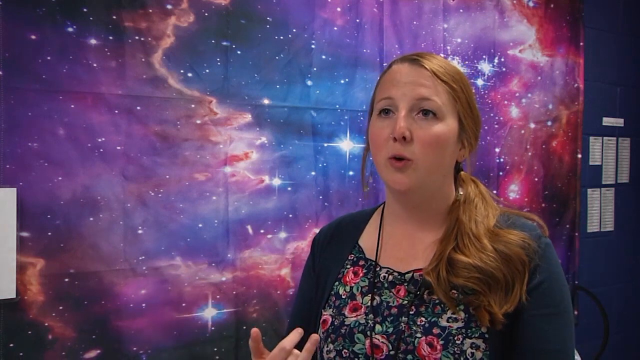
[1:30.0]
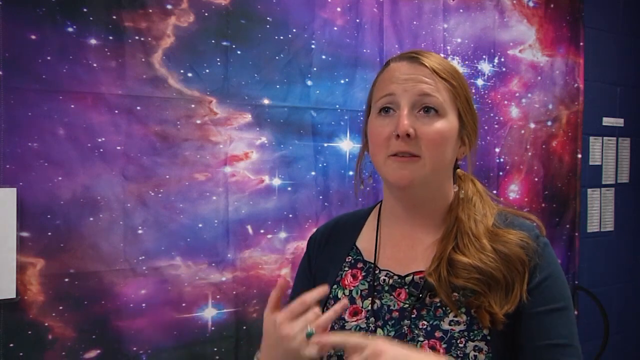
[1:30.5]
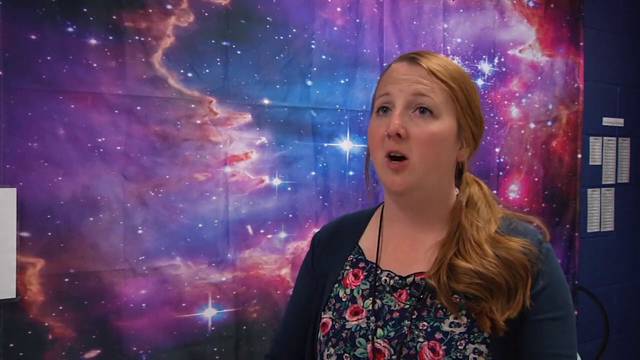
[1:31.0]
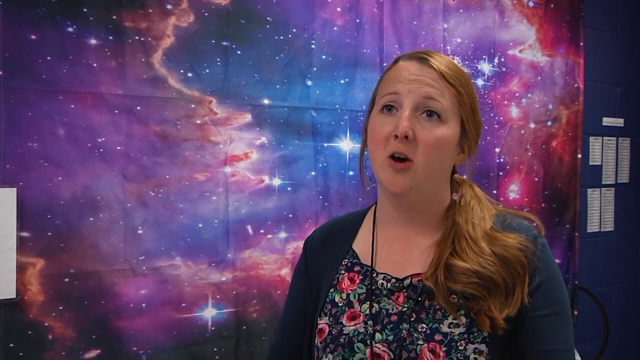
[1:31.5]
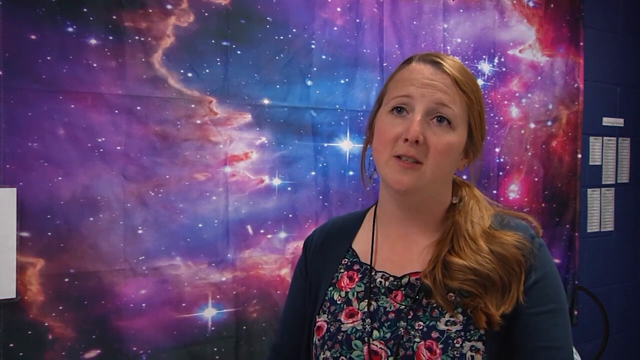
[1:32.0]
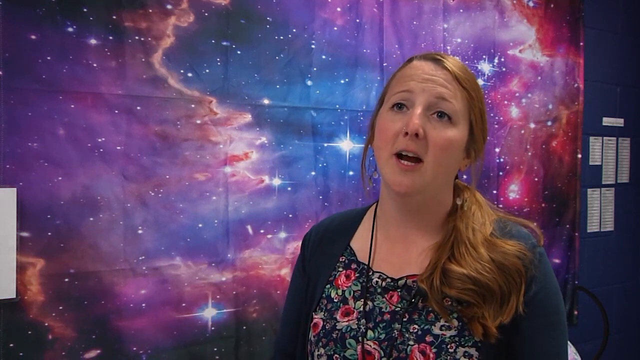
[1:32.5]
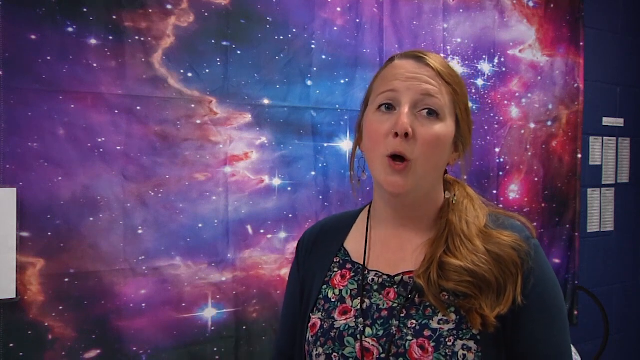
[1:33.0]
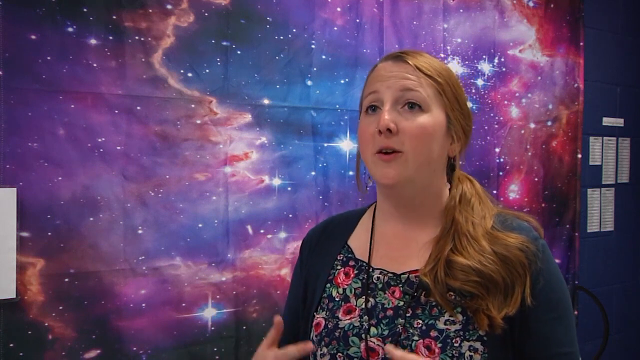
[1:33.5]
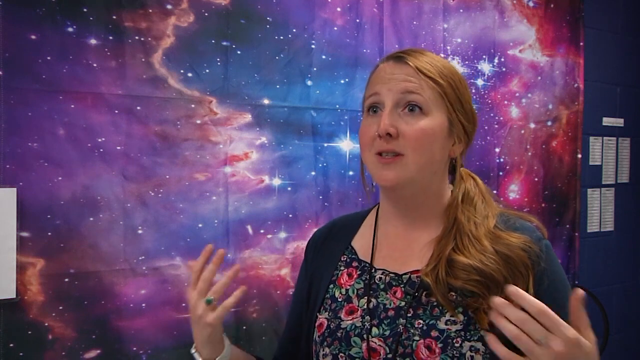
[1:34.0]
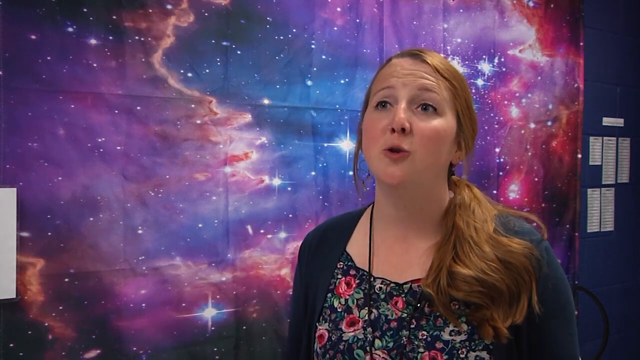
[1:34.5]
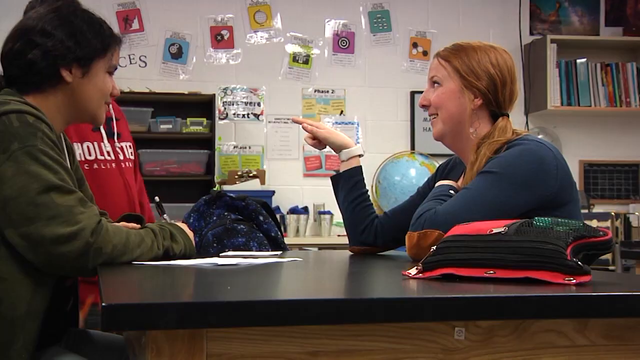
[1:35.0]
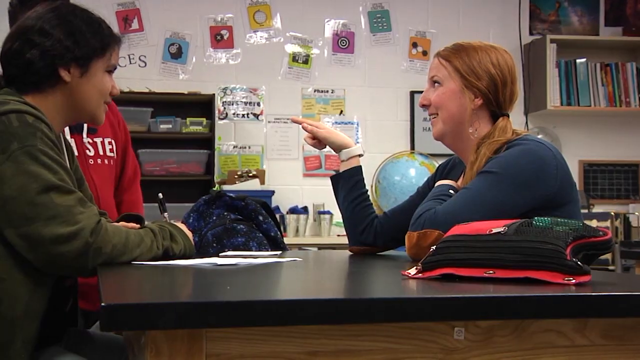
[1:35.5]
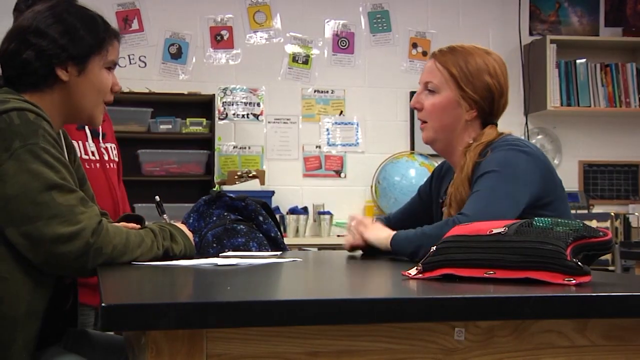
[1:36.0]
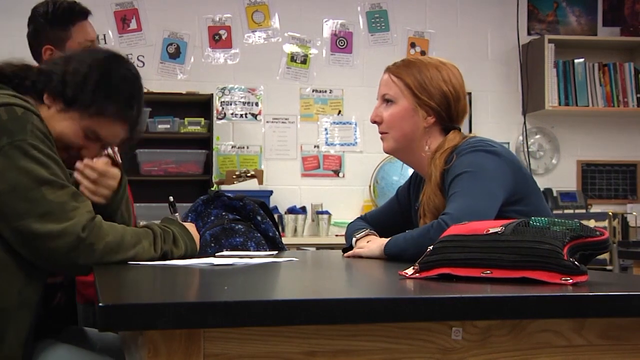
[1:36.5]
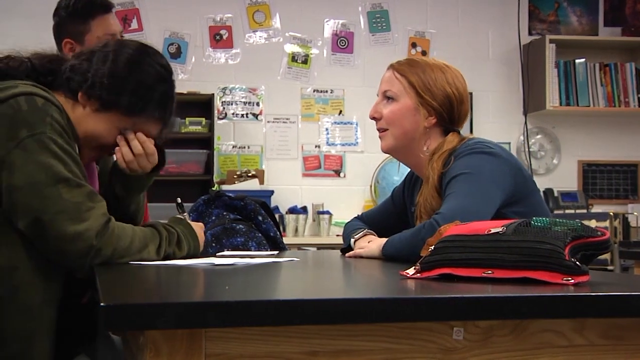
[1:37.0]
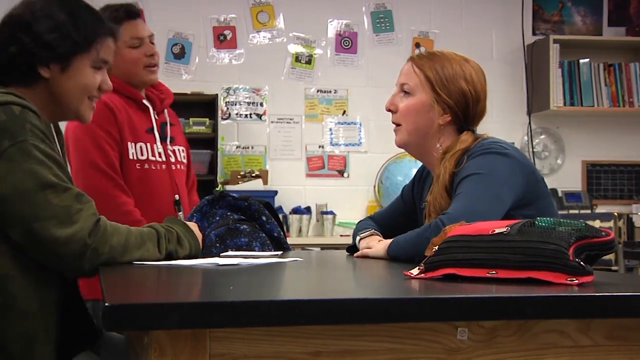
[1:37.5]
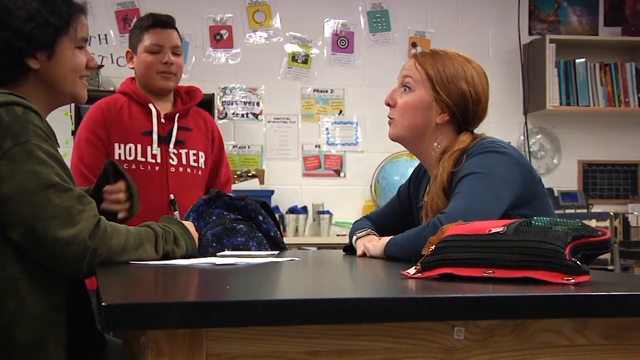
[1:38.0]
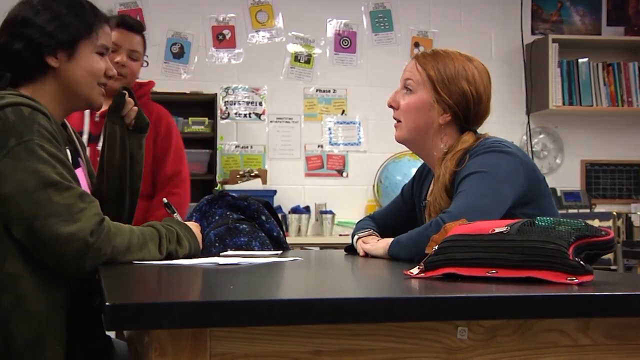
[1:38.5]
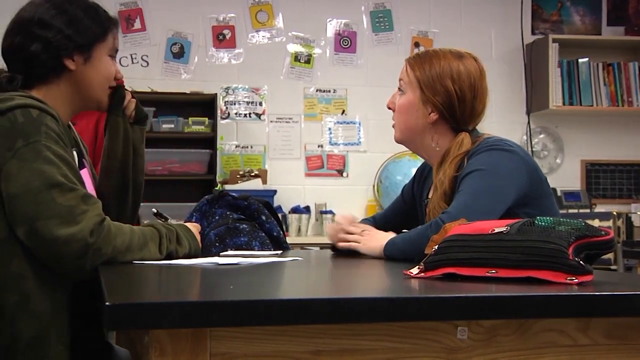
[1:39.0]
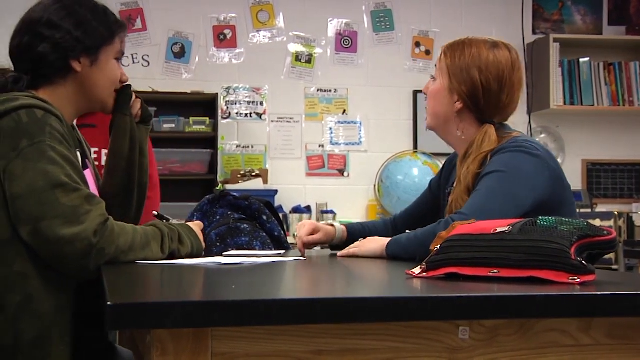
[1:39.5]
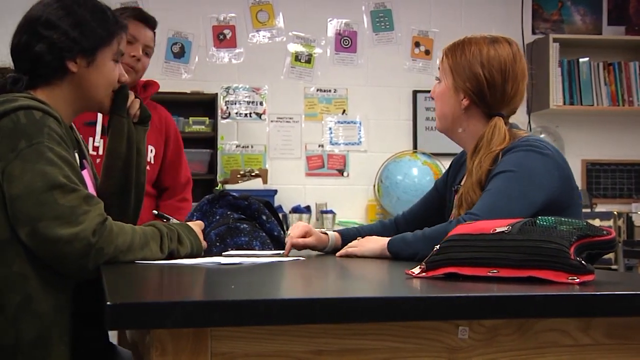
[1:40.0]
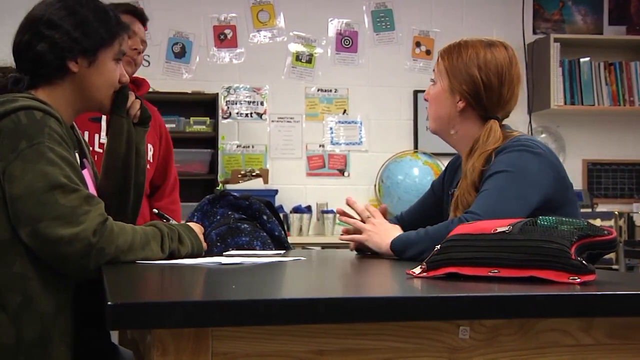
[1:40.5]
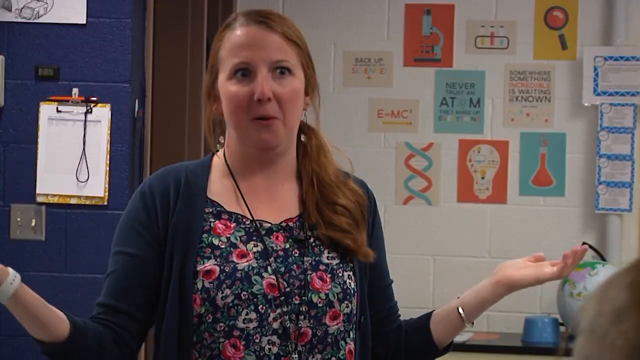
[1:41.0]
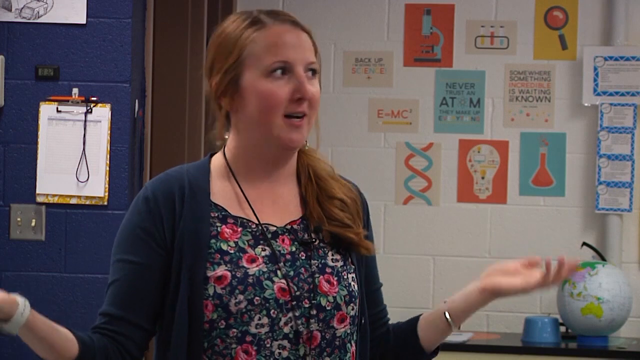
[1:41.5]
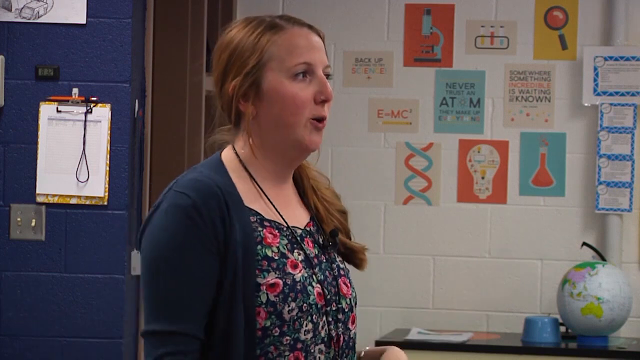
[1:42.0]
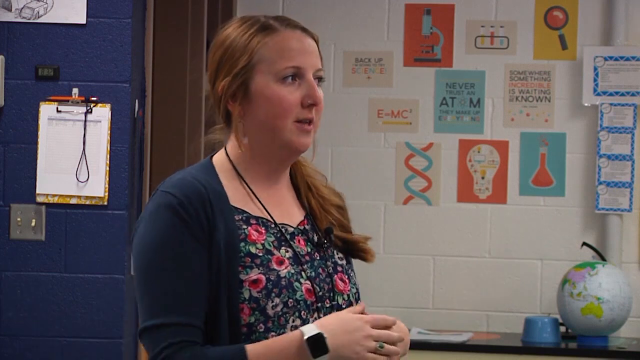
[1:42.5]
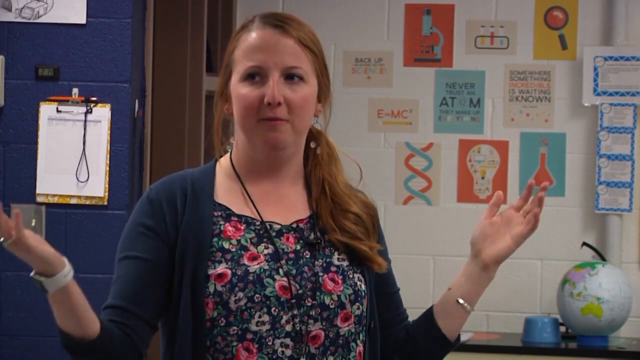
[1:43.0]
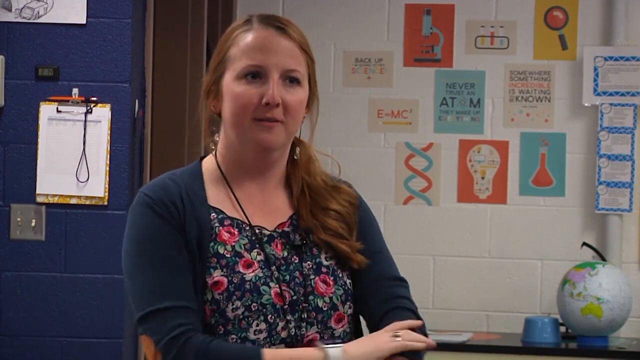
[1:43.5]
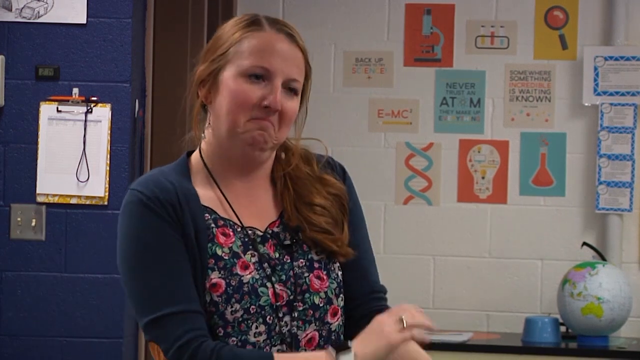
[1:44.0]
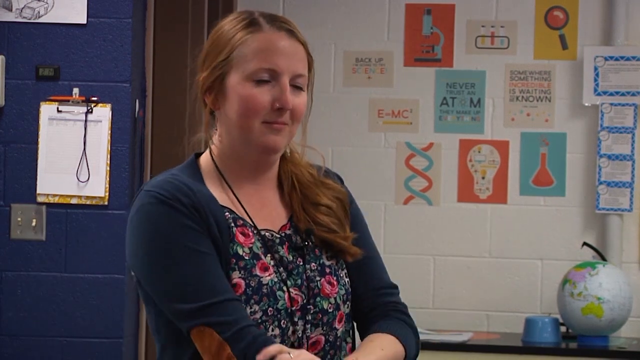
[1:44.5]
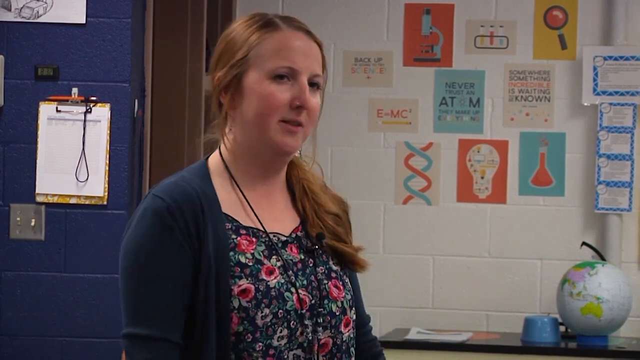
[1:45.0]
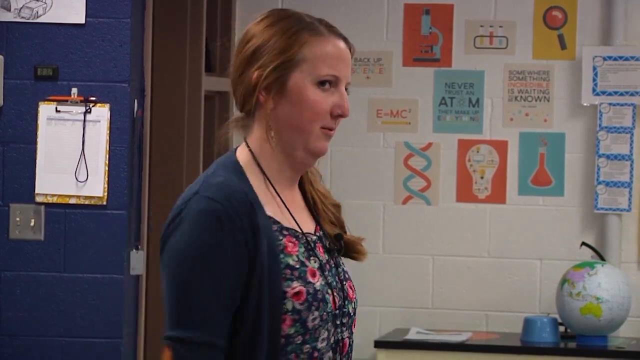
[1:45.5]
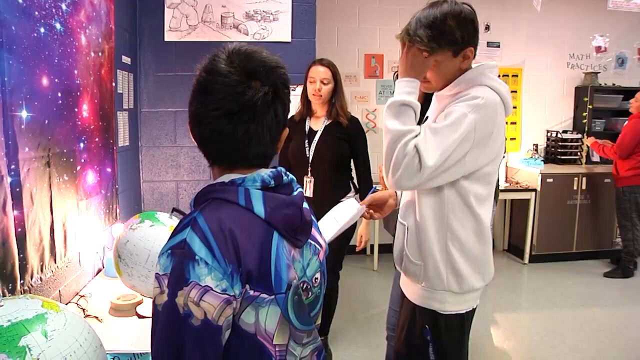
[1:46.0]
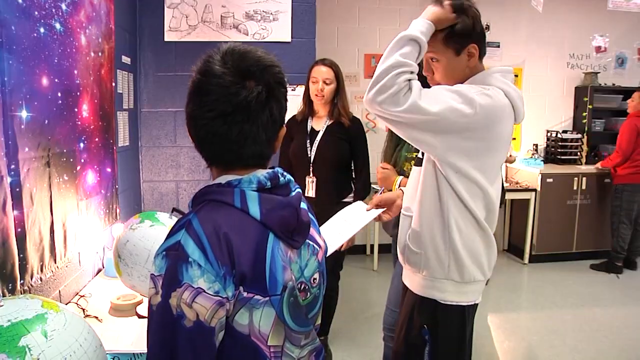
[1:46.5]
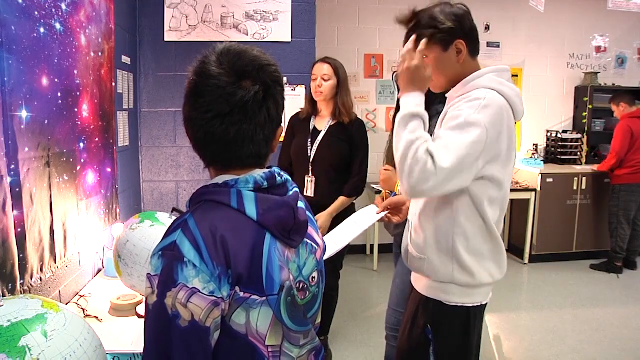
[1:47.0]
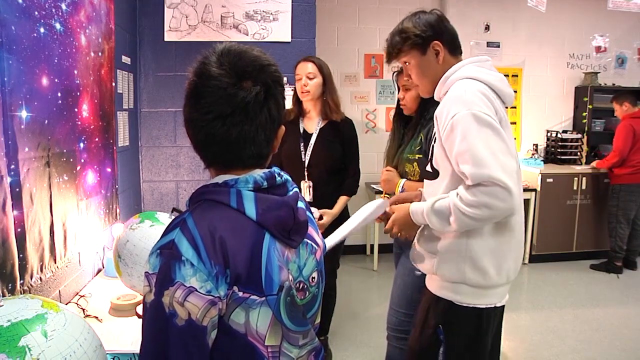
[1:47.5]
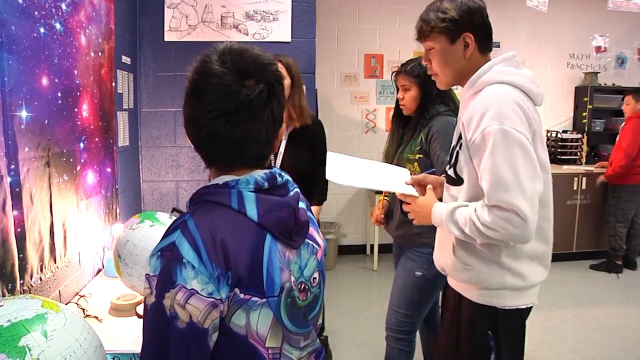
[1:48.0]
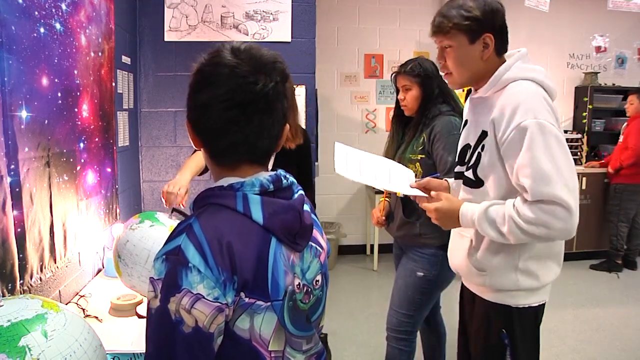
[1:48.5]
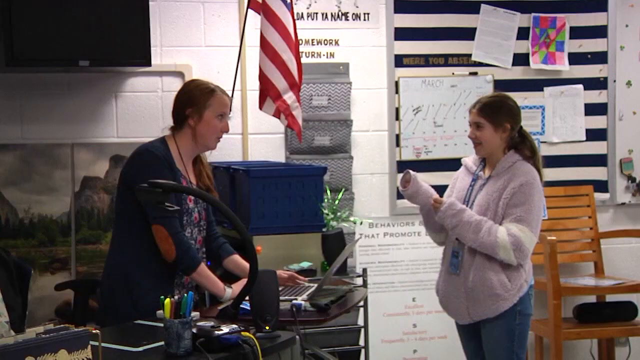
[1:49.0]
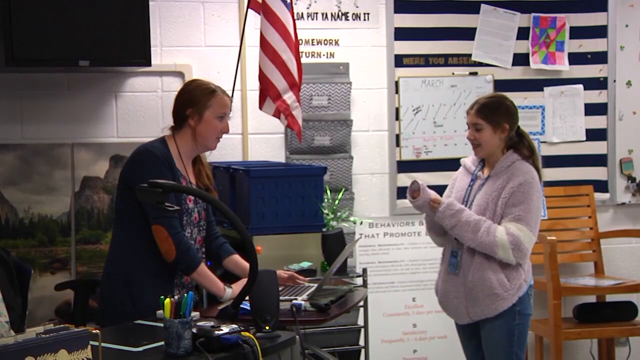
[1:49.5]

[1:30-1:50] A Caucasian woman with red hair speaks while standing in front of a poster of a universe with twinkling stars, gesturing with her hands and frequently tilting and moving her head and hands. The scene shifts to her sitting at a table with two students, a Caucasian female with black hair and a male in a red jersey. The three talk, with laughter and smiles from all of them. As the red-haired woman speaks, she faces her body and head toward the male in the red jersey, pointing toward the table. Next, the teacher stands addressing a group of students, gesturing with her hands, and then pulls the sleeves of her jersey up. The scene transitions to a group of students standing in front of a globe.